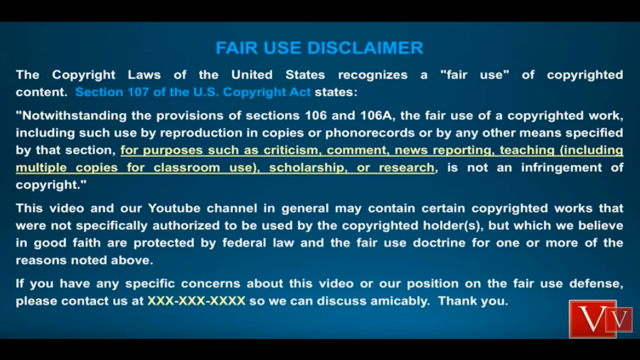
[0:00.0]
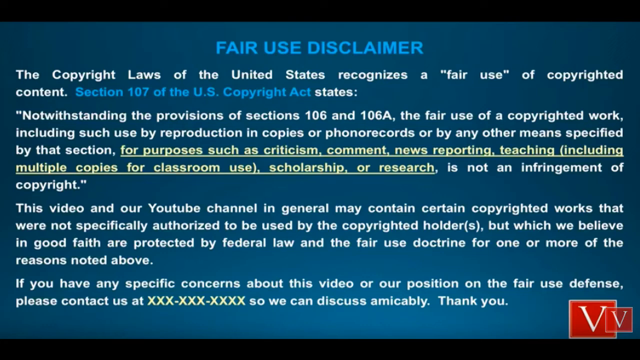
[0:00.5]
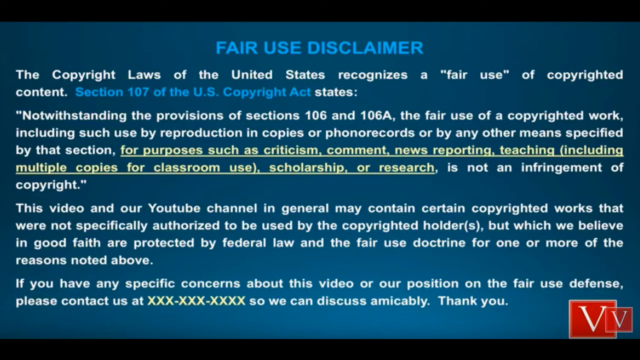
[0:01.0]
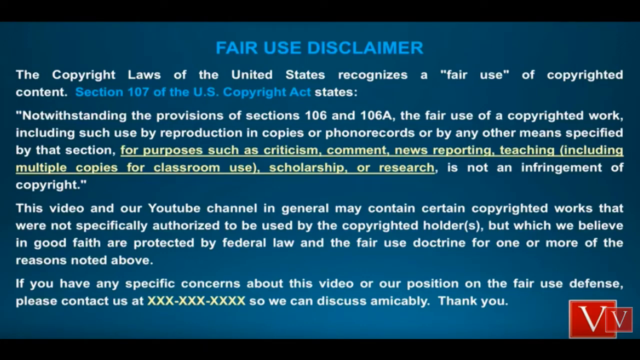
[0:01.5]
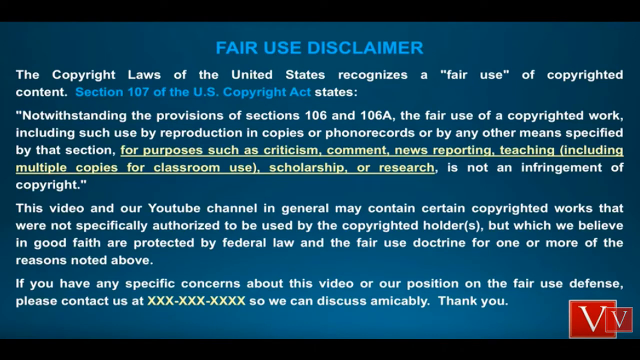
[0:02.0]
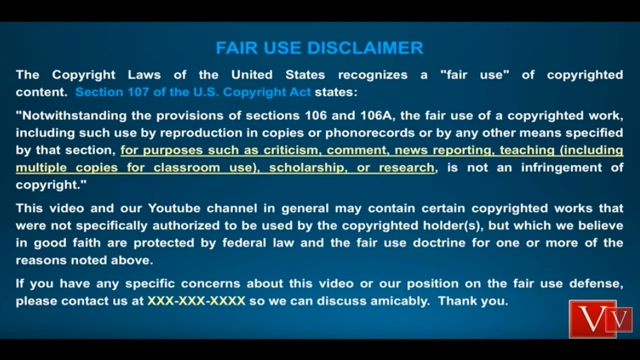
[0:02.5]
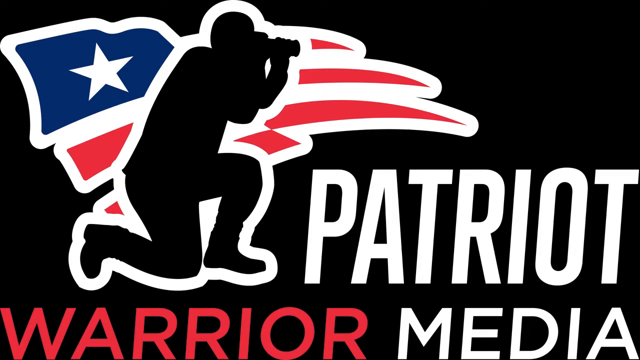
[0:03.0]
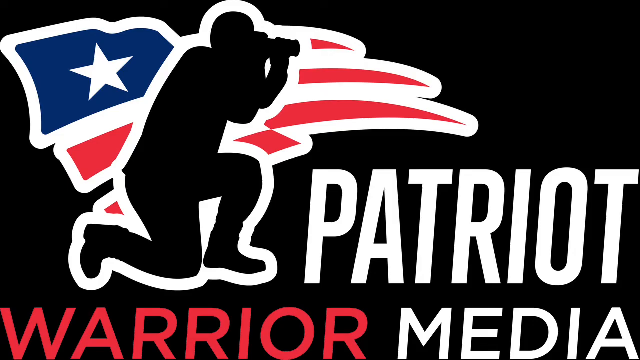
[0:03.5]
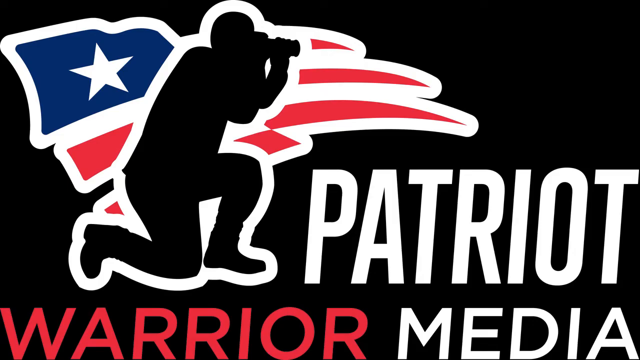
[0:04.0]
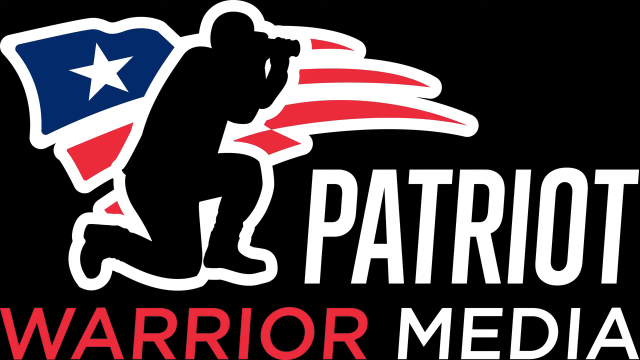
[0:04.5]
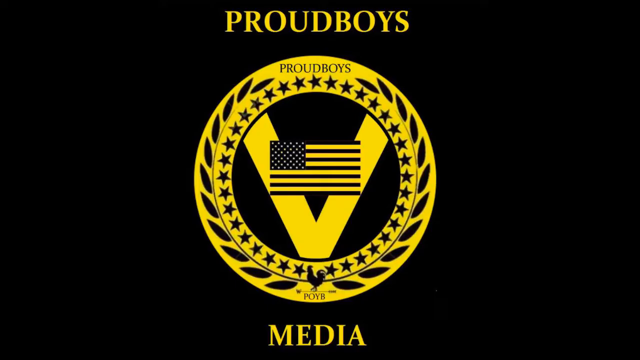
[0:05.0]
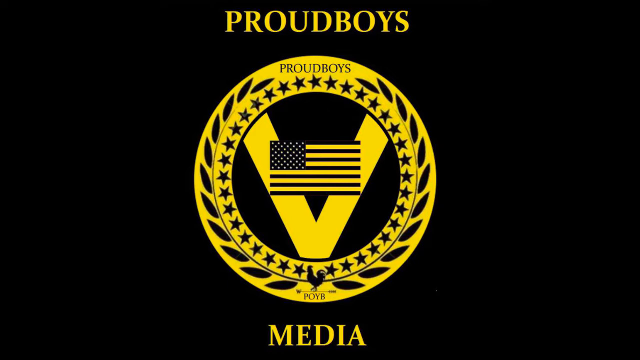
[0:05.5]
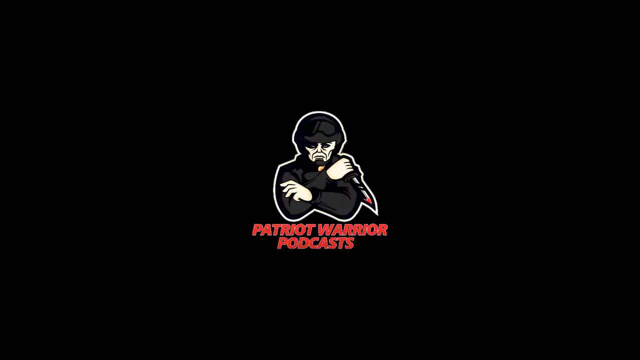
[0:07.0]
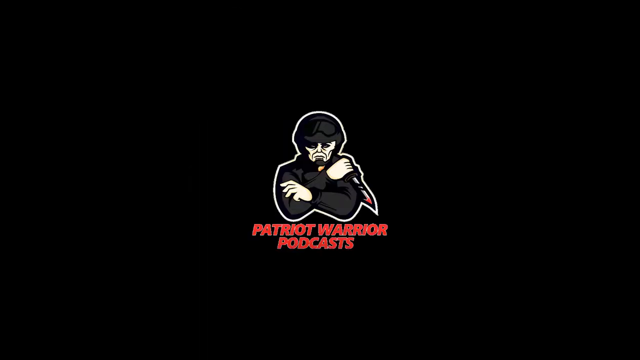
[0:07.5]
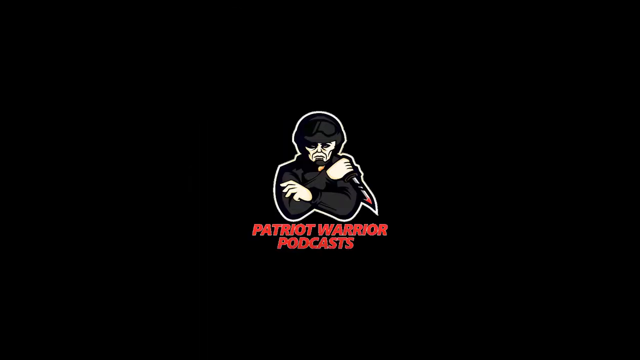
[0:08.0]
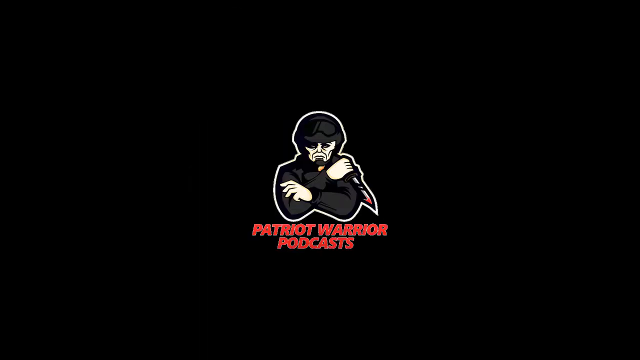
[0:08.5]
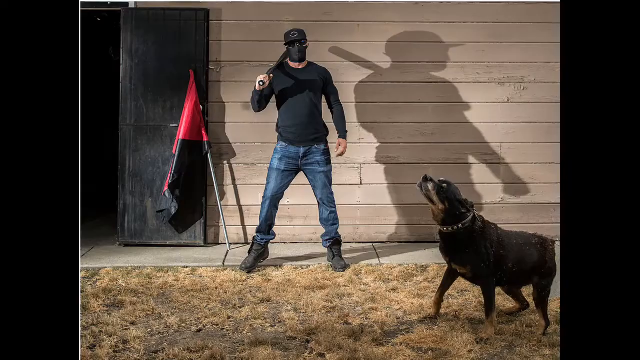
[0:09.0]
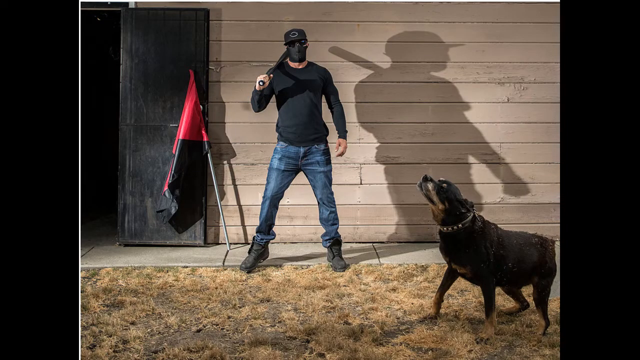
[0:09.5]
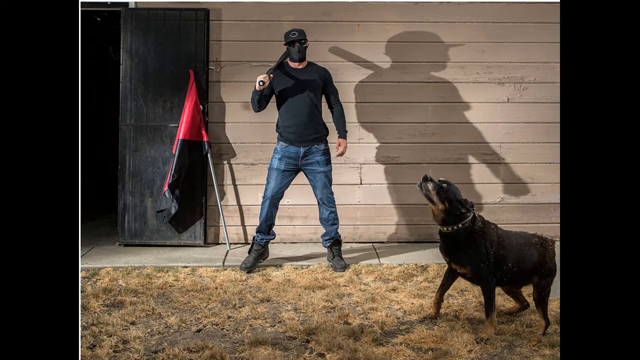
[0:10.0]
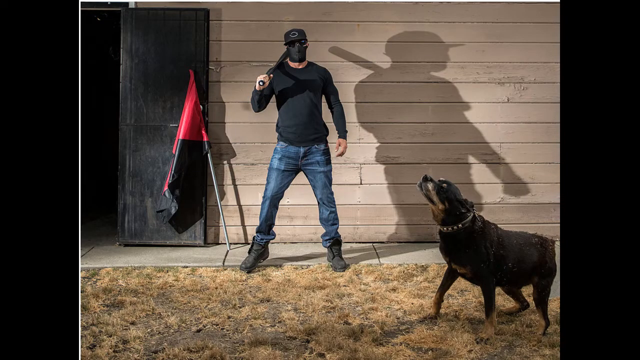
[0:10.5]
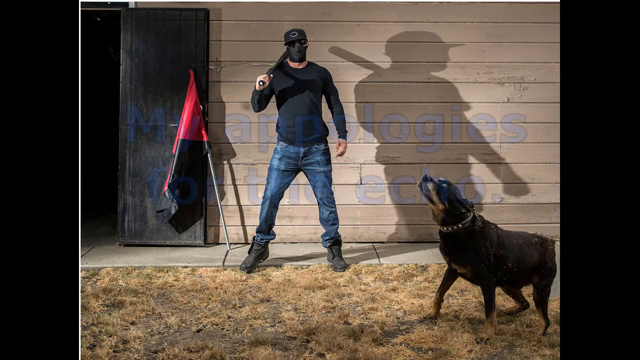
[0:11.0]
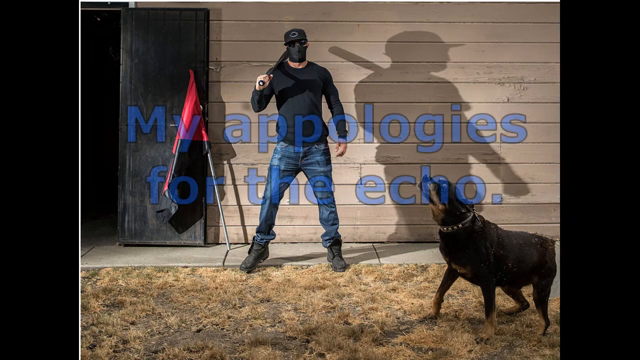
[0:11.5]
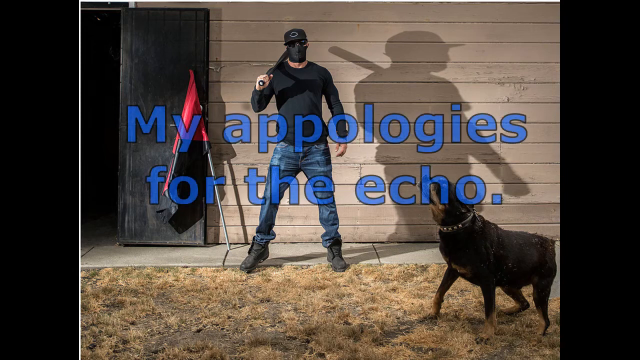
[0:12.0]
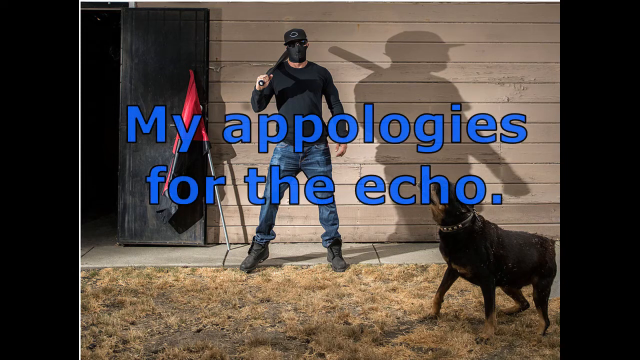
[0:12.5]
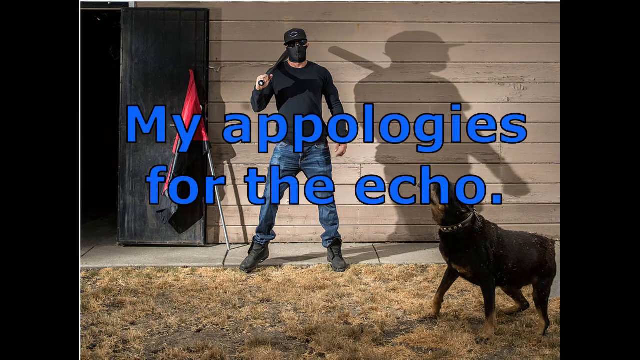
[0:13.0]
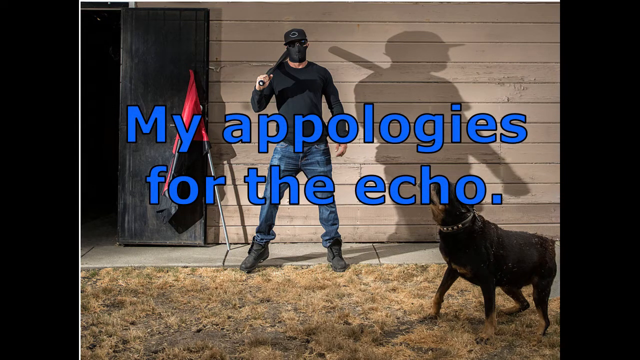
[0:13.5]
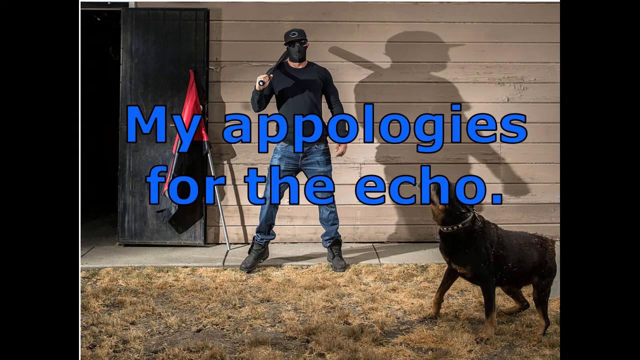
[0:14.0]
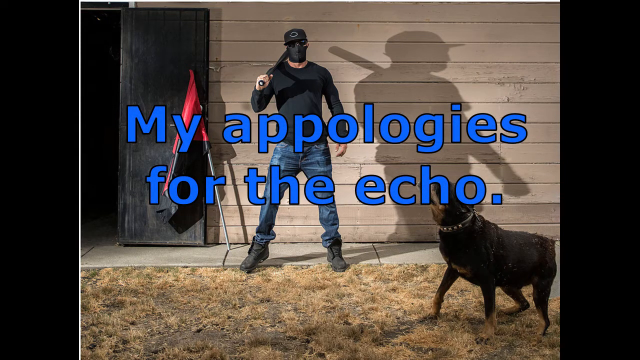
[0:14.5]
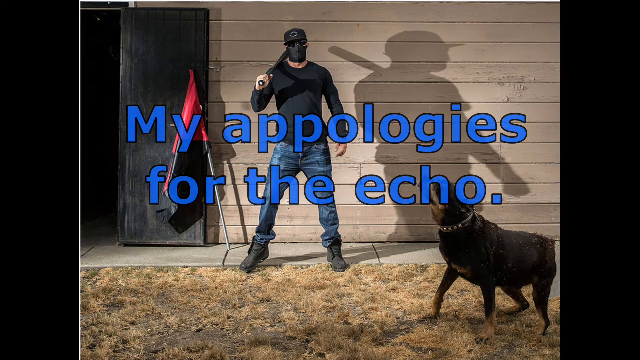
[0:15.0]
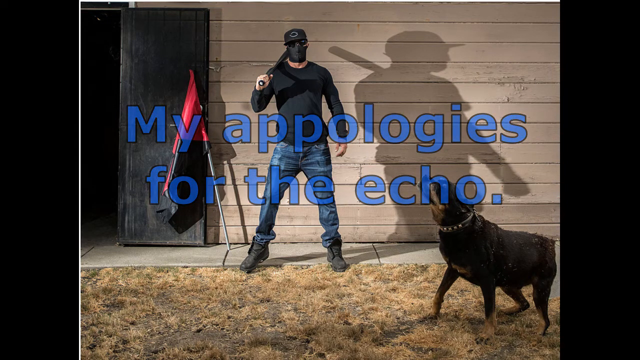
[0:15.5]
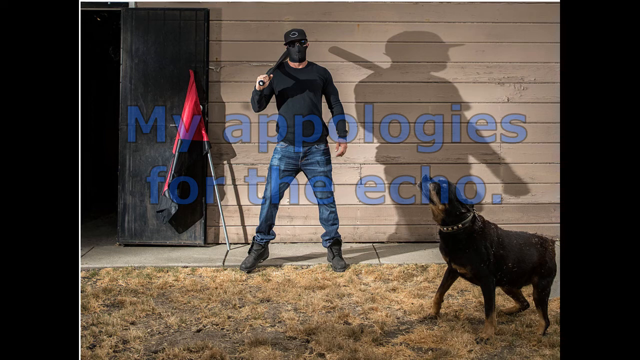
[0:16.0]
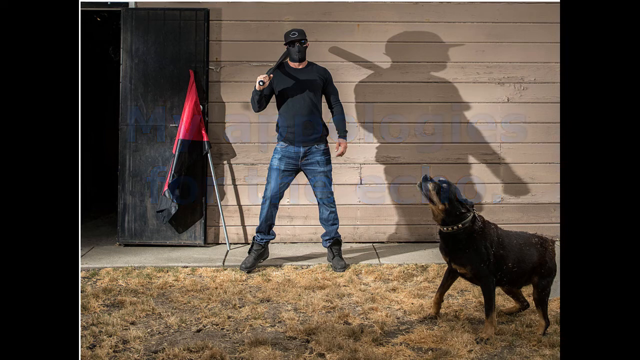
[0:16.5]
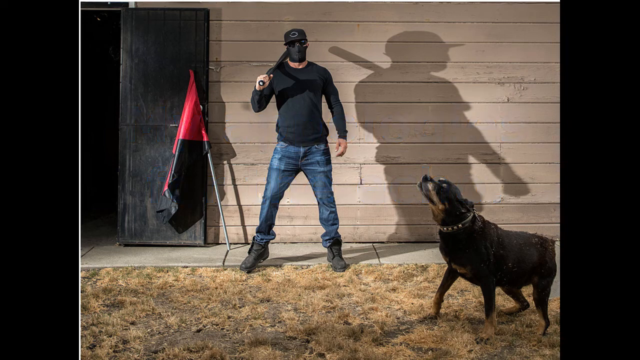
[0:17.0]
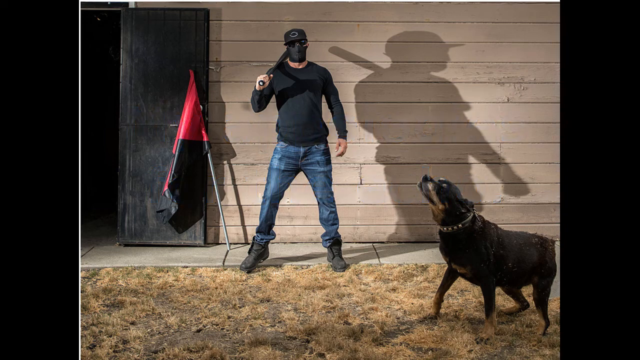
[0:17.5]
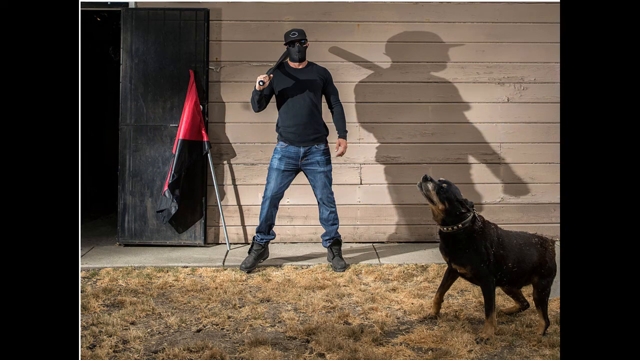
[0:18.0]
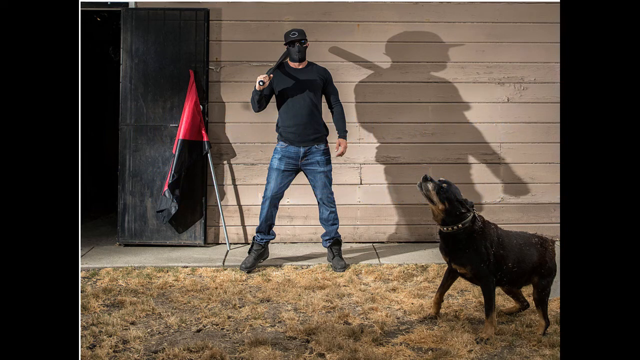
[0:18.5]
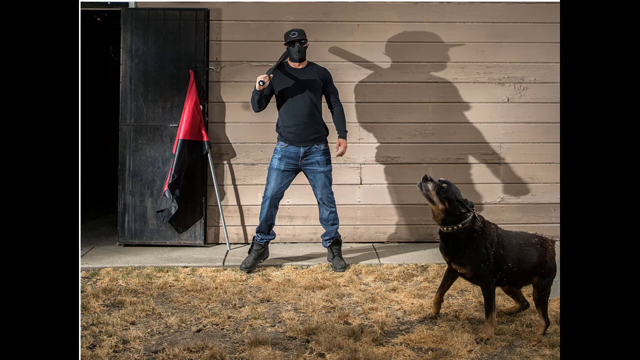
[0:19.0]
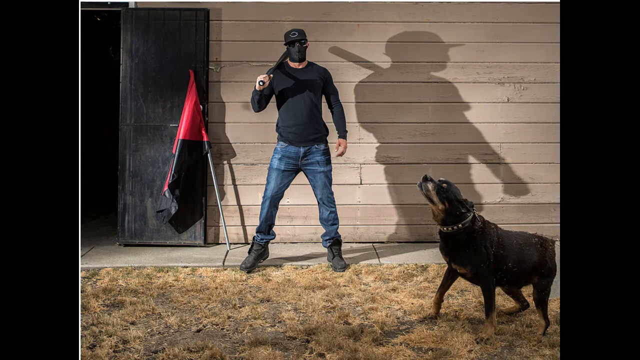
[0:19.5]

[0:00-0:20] A fair use disclaimer appears on a navy blue background. Next comes a patriotic warrior media logo showing a human being holding something that looks like a binocular, in patriotic colours of white, blue and red, on a black background. A screen then reads "Proud Boys"; the yellow Proud Boys logo has some black stars and the words "Proud Boys Media" on a black background. A logo then reads "Patriot Warrior podcast". A man who looks like a gym person wears a black mask and holds something on his arm, and a dog that looks like a pit bull appears. Text on the screen reads "my apologies for the echo". The place where the man stands is very bright.